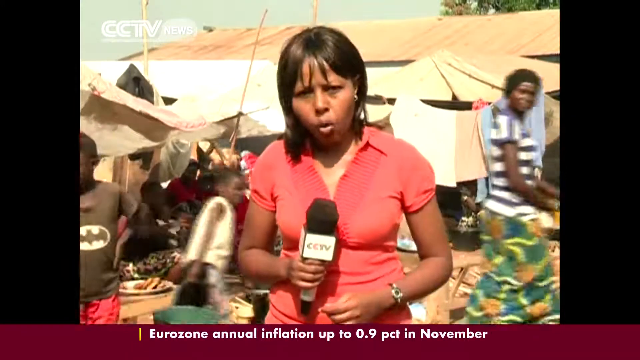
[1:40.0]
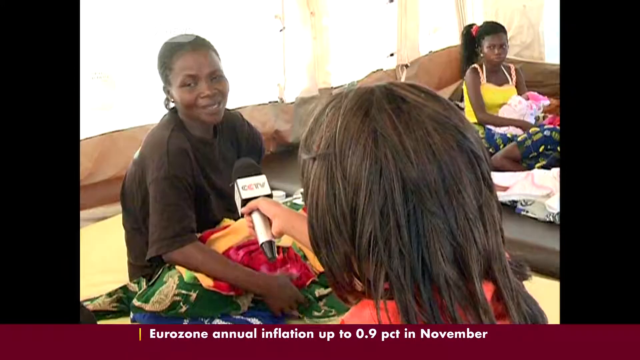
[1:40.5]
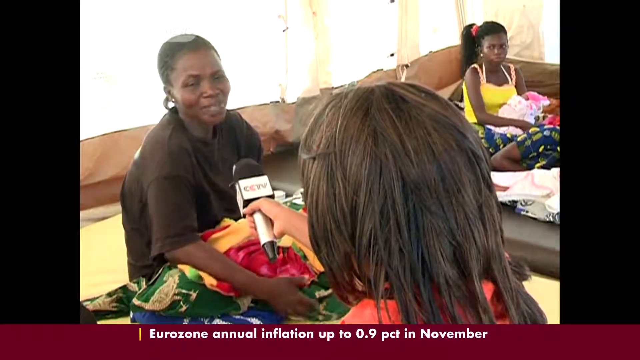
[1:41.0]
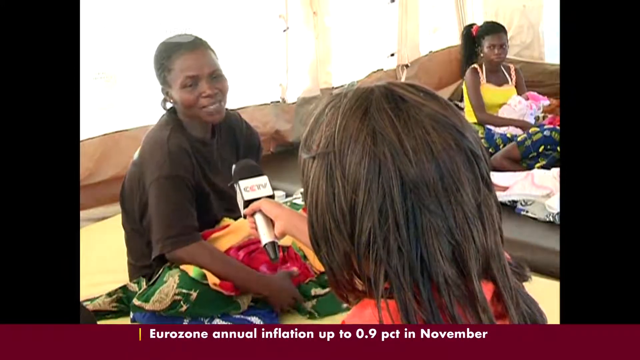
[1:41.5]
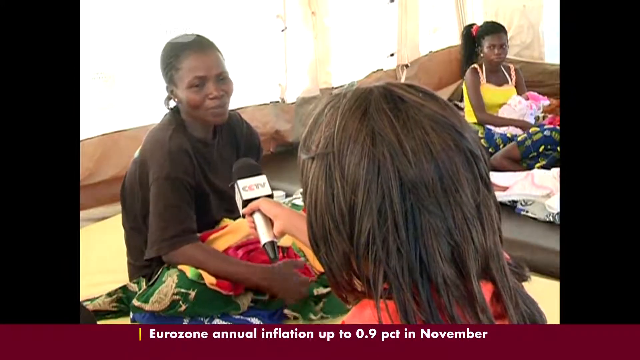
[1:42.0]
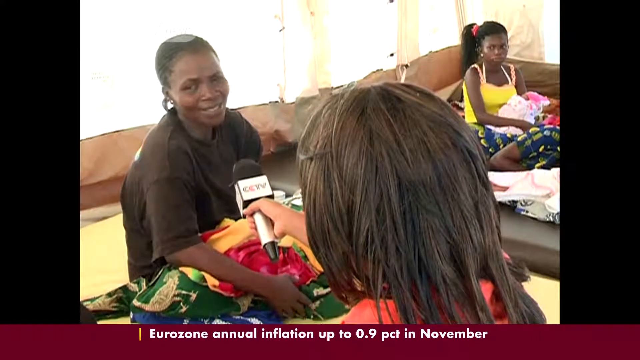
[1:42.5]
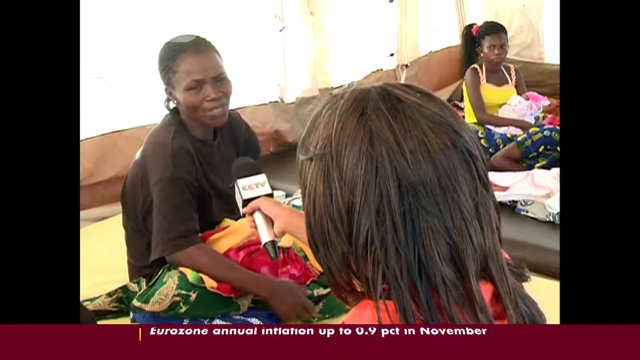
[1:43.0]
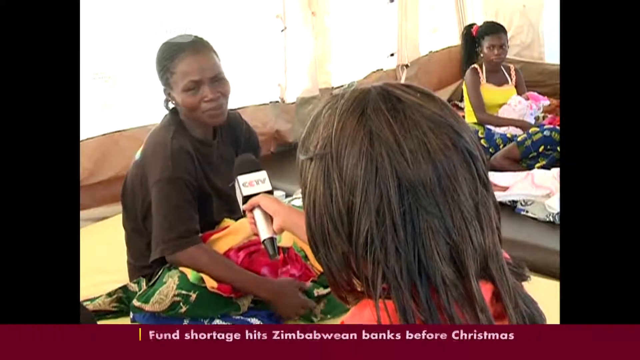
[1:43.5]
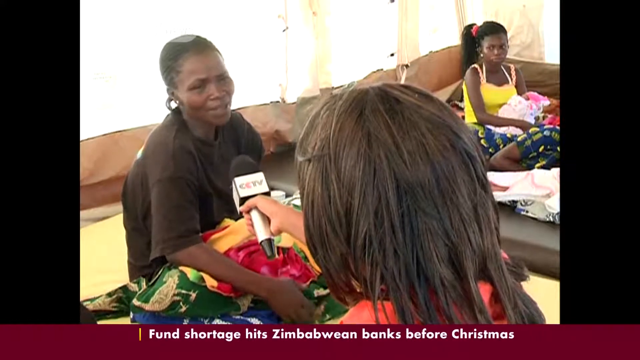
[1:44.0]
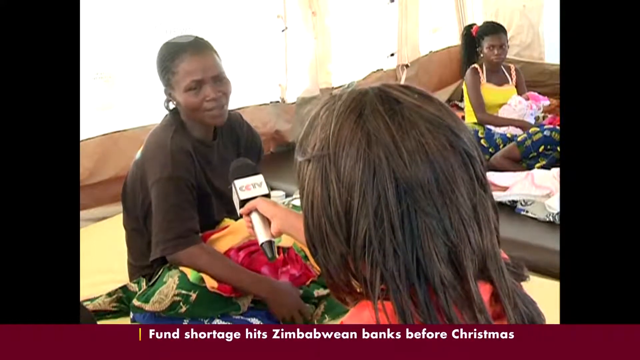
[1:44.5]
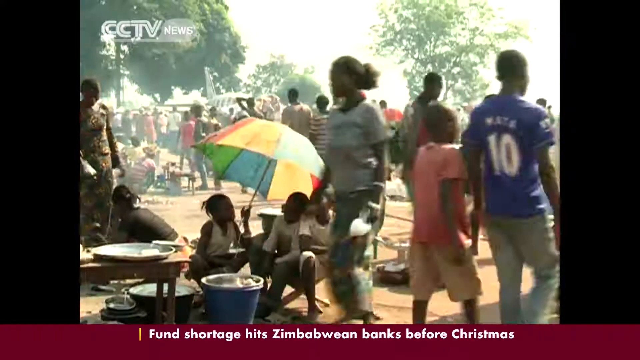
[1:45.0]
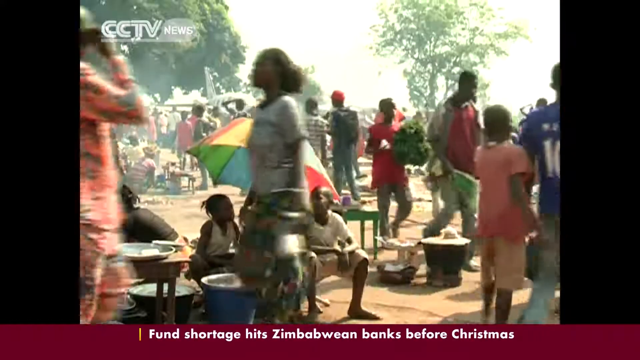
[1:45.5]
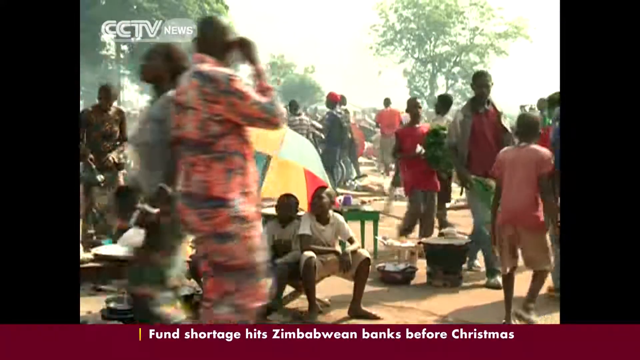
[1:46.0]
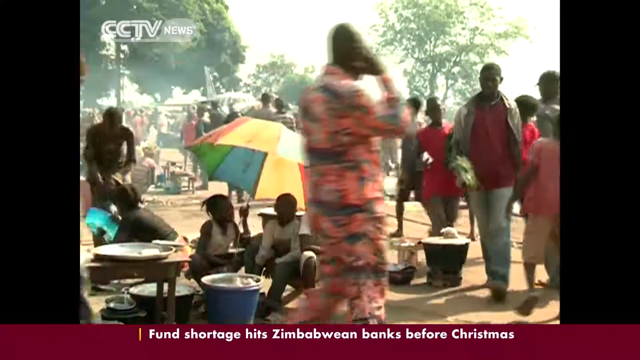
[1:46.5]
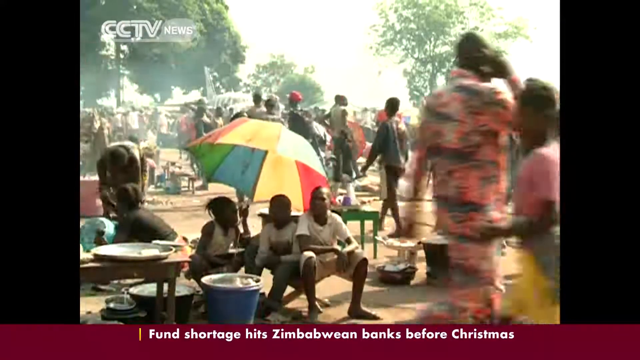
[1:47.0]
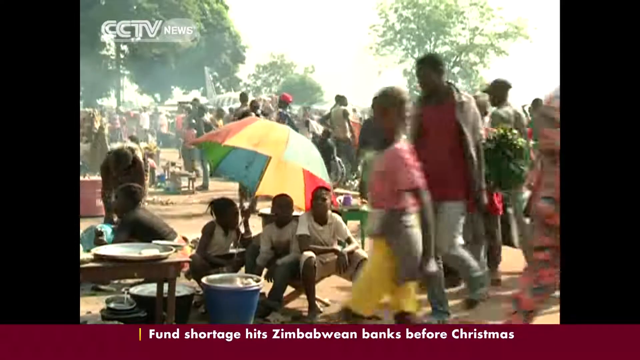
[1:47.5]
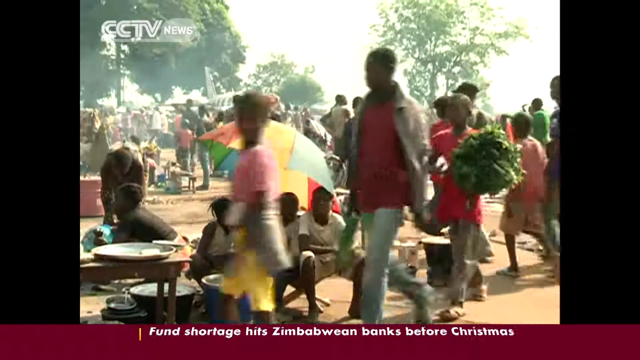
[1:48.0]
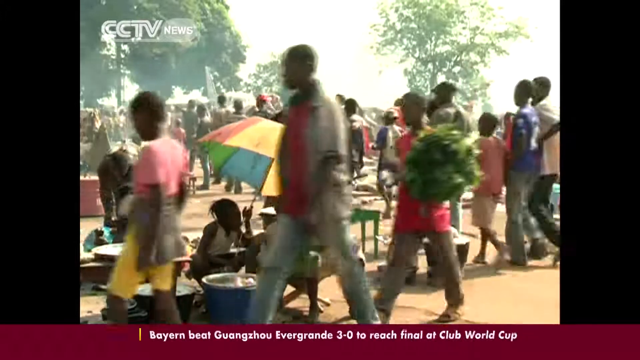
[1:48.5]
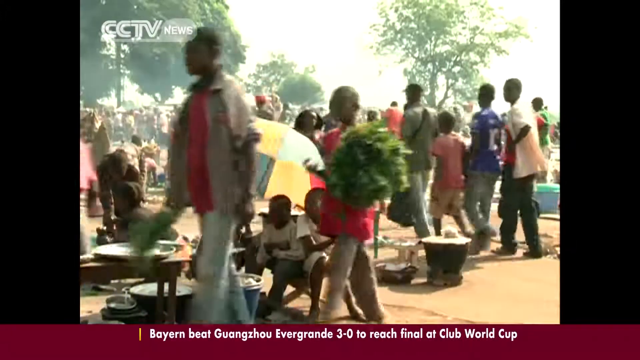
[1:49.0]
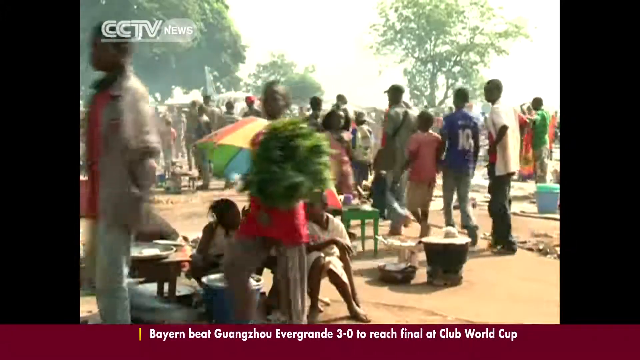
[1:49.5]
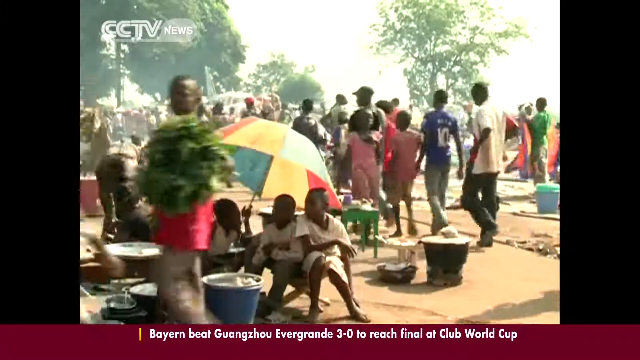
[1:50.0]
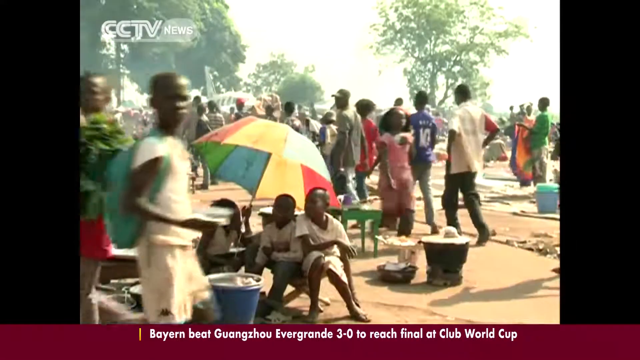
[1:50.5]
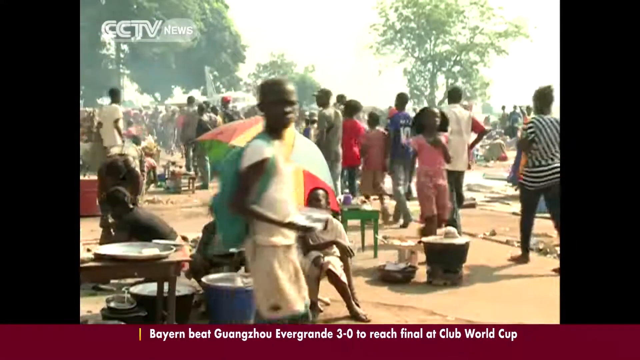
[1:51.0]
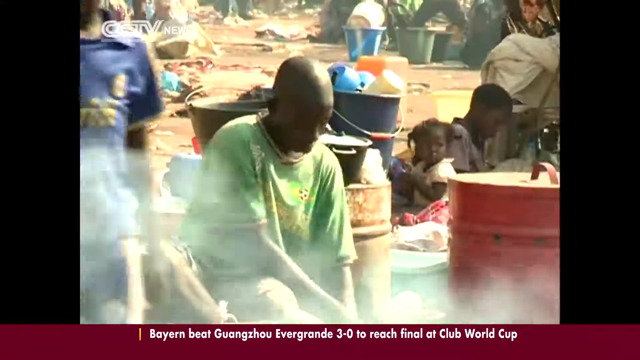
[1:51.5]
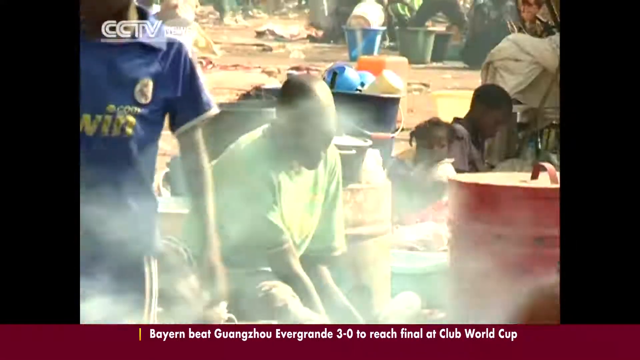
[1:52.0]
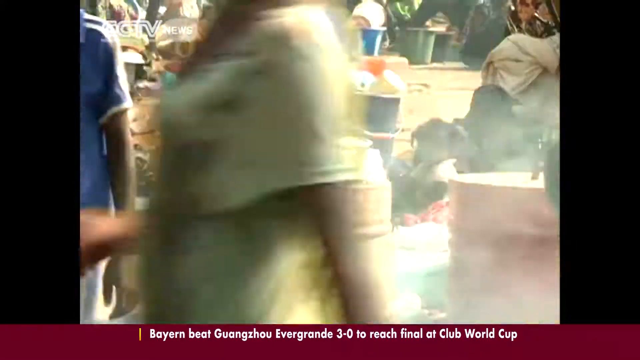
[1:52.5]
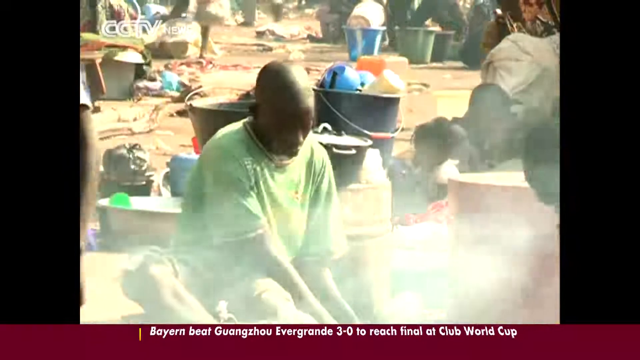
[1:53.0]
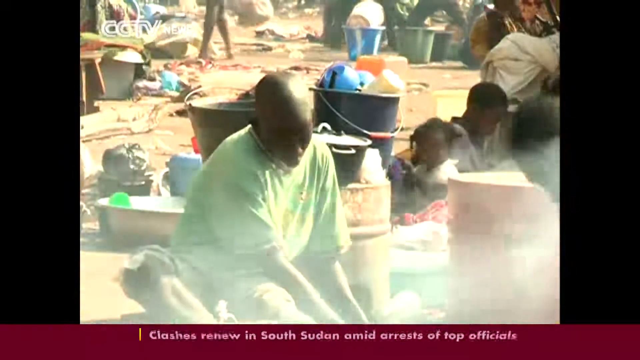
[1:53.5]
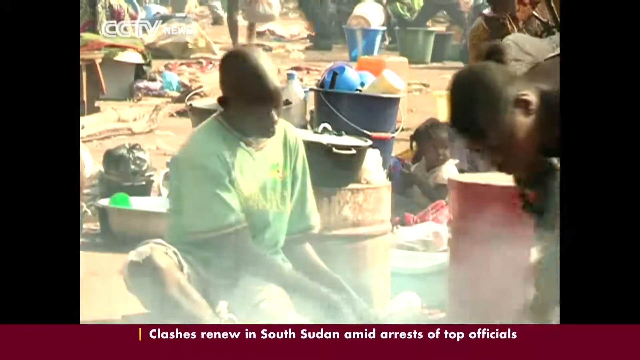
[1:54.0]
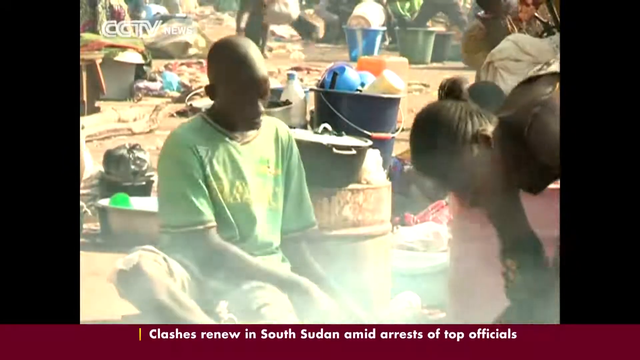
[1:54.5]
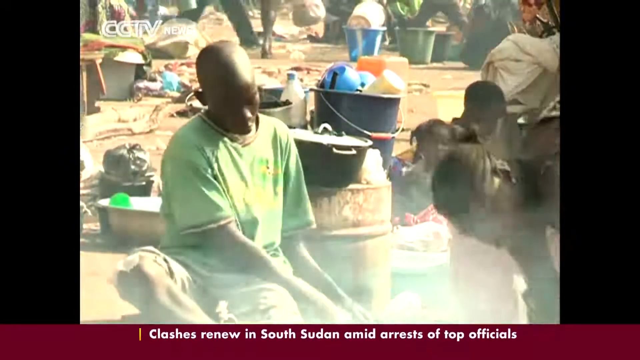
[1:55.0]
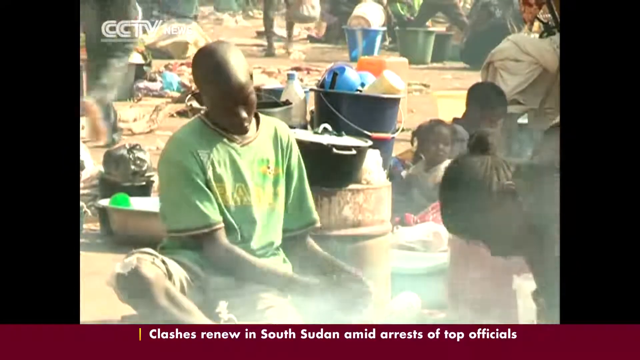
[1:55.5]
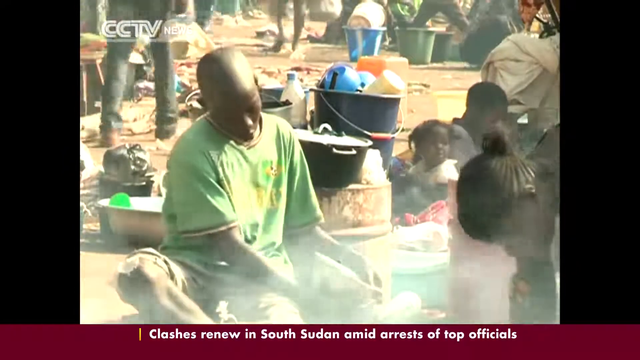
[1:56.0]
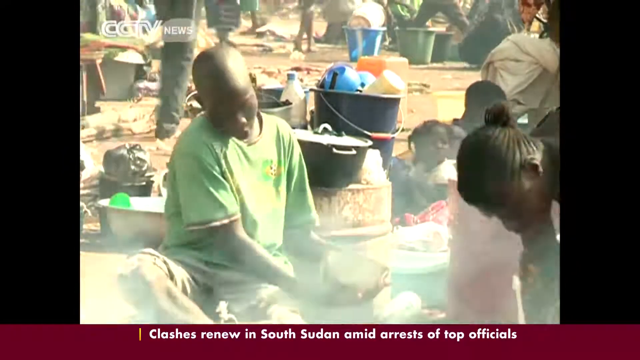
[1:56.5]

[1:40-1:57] A news reporter with brown hair, wearing an orange top, holds a microphone that says "CCTV"; she is at some sort of camp with tents. Inside one of the tents, she interviews a woman in a brown shirt who is sitting on the ground. Back outside, people move all around the camp, and some sit under an umbrella for shade. A close-up shows a man wearing green, who appears to be working on something with his hands that is hard to see; steam is emerging, so something is possibly being cooked there. Another person enters the picture on the right-hand side, leans down, and appears to be helping with whatever the man is doing.